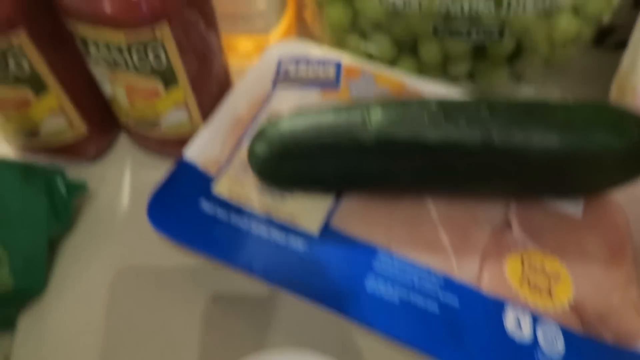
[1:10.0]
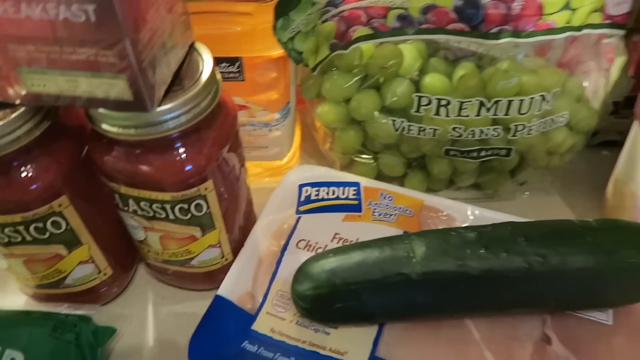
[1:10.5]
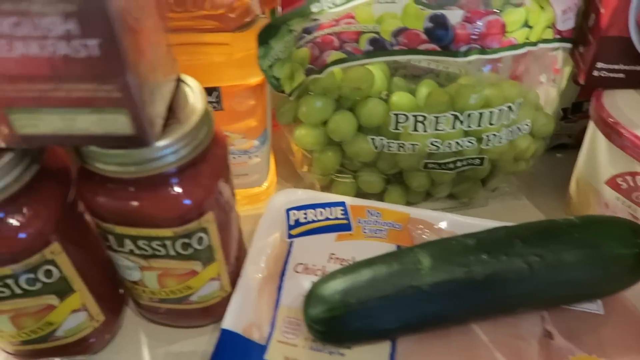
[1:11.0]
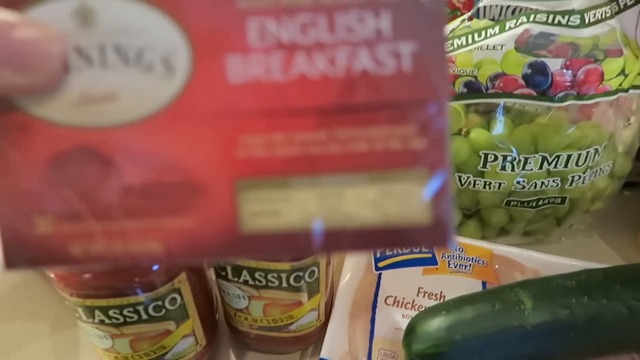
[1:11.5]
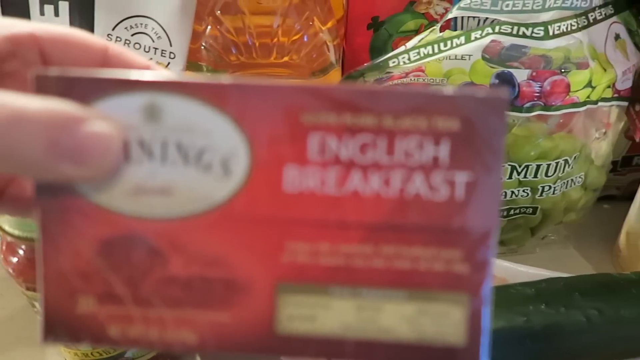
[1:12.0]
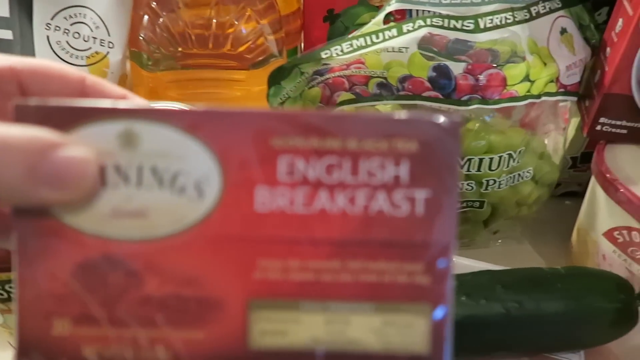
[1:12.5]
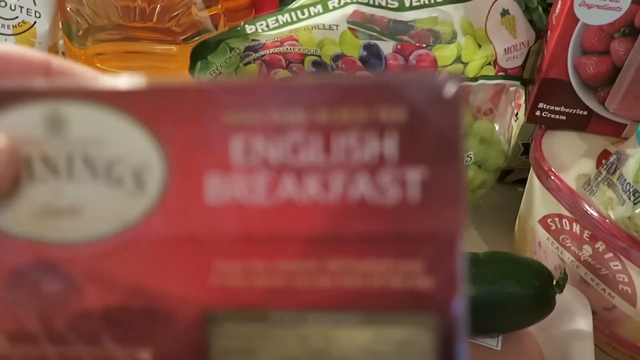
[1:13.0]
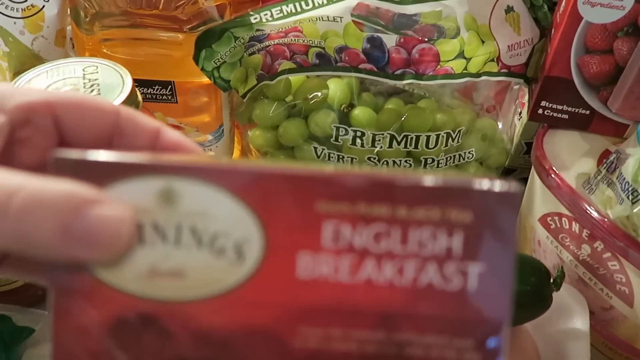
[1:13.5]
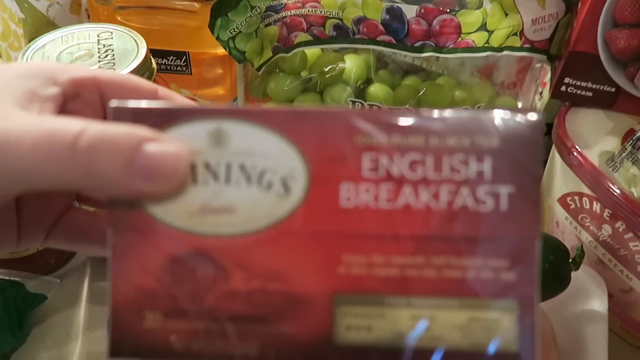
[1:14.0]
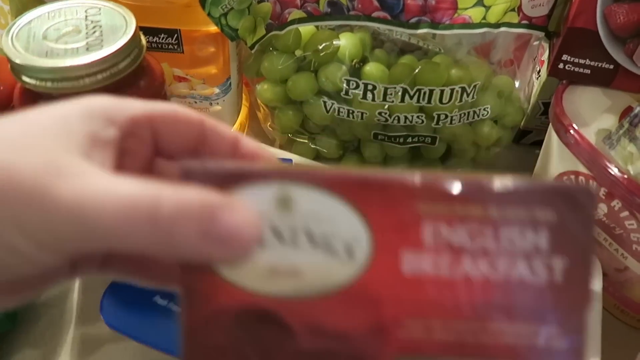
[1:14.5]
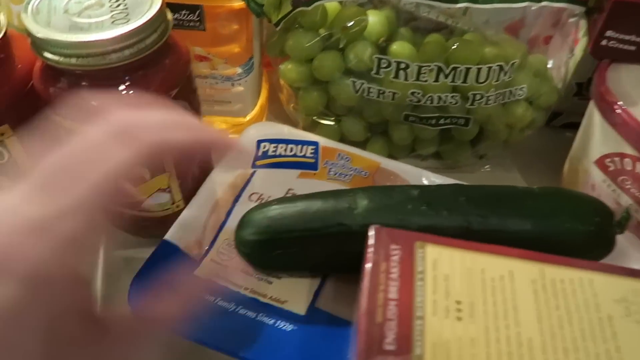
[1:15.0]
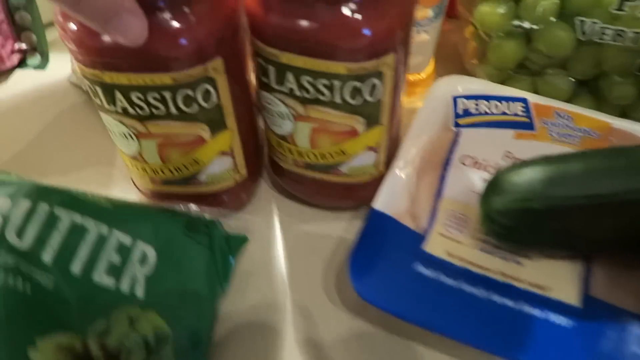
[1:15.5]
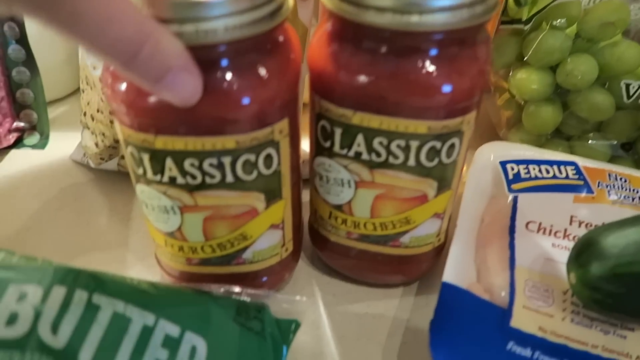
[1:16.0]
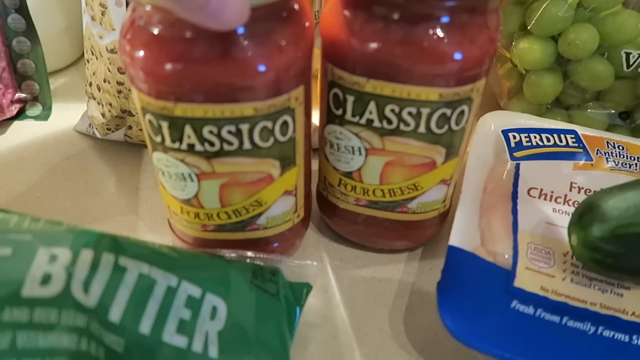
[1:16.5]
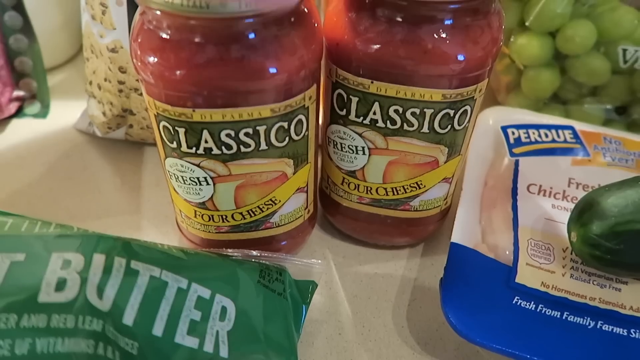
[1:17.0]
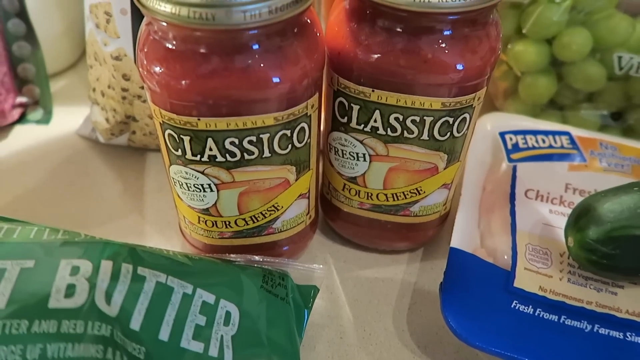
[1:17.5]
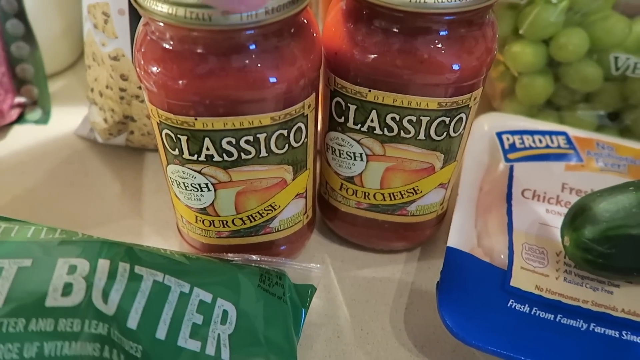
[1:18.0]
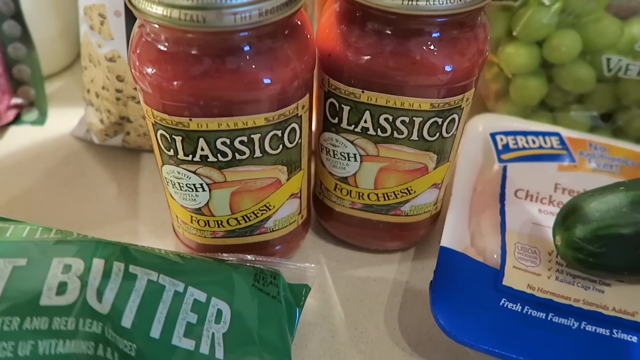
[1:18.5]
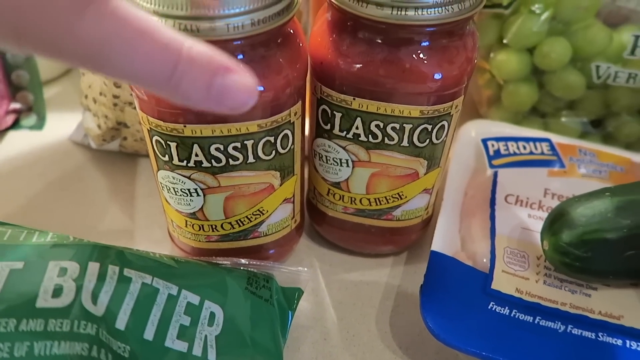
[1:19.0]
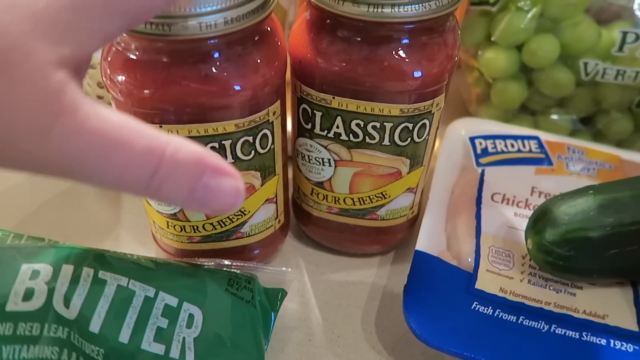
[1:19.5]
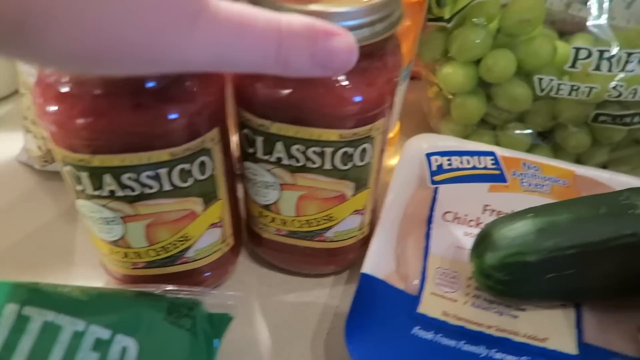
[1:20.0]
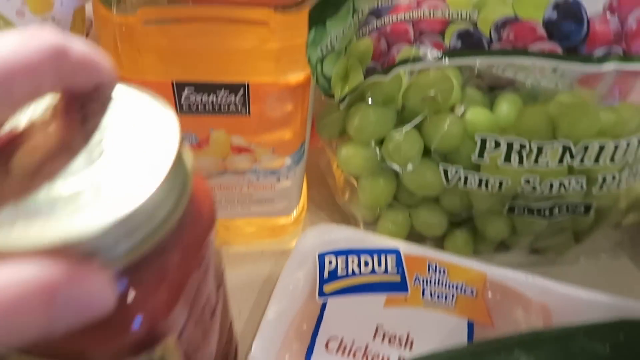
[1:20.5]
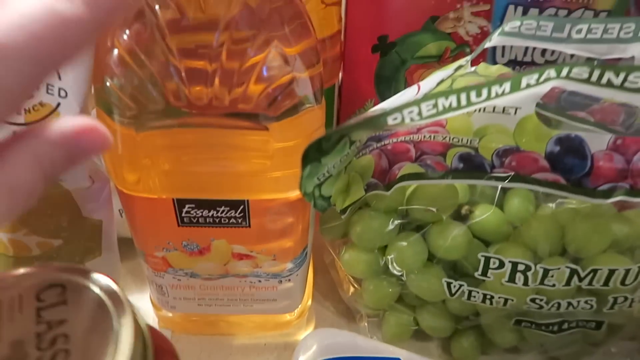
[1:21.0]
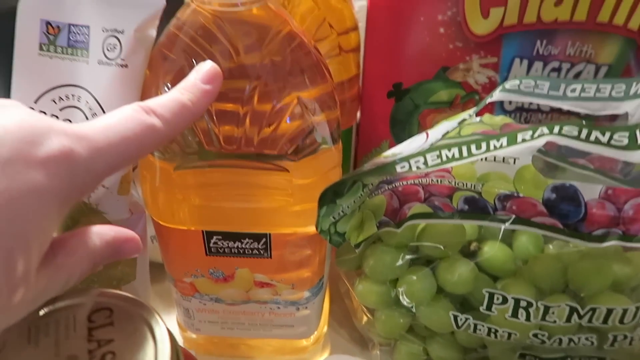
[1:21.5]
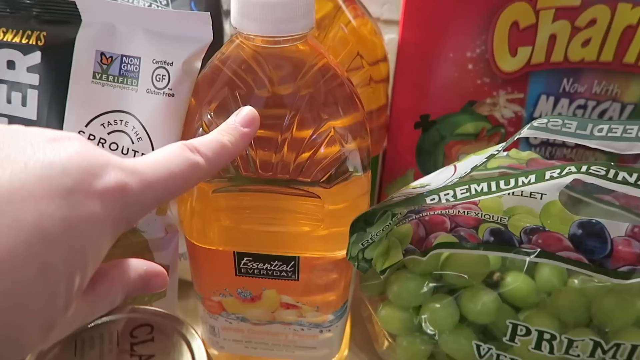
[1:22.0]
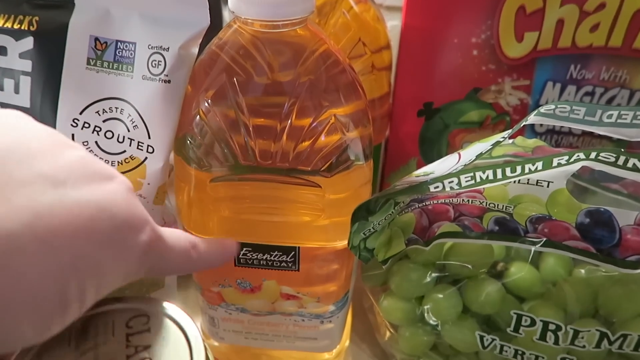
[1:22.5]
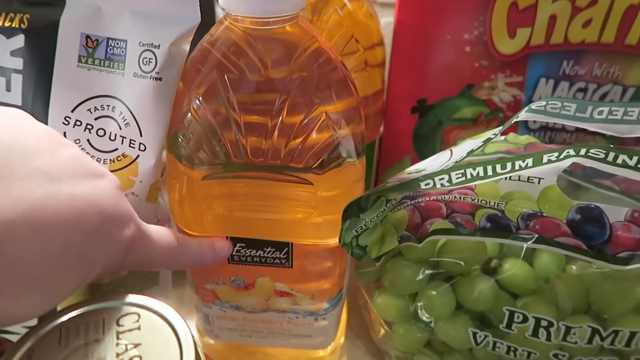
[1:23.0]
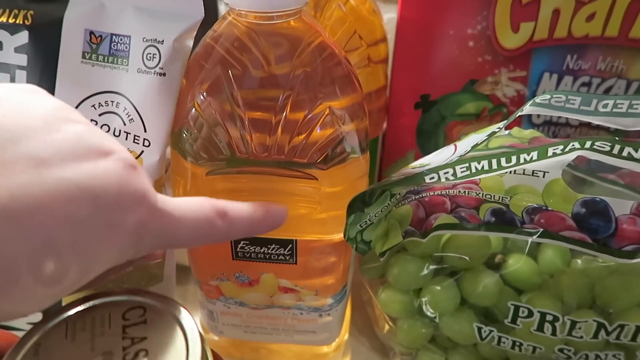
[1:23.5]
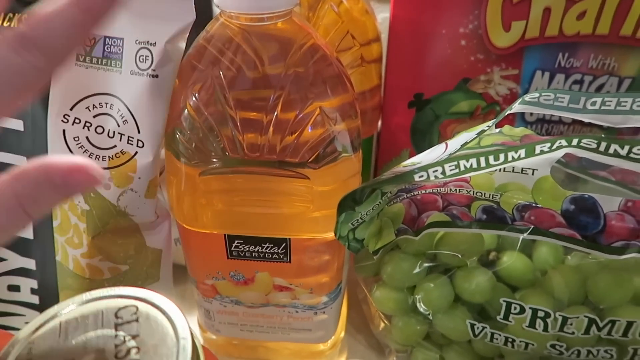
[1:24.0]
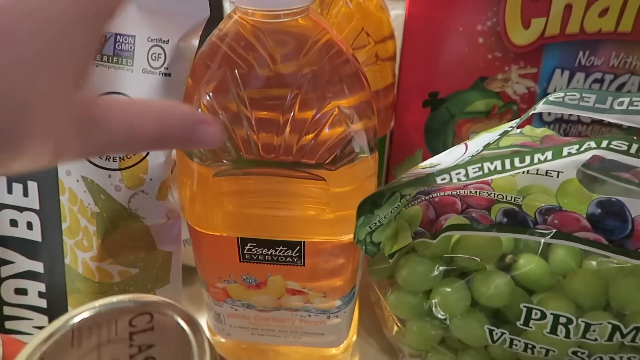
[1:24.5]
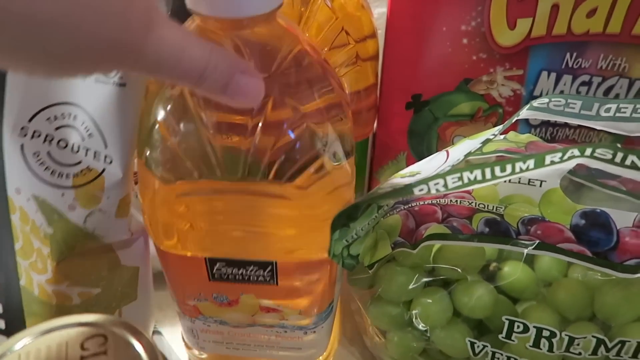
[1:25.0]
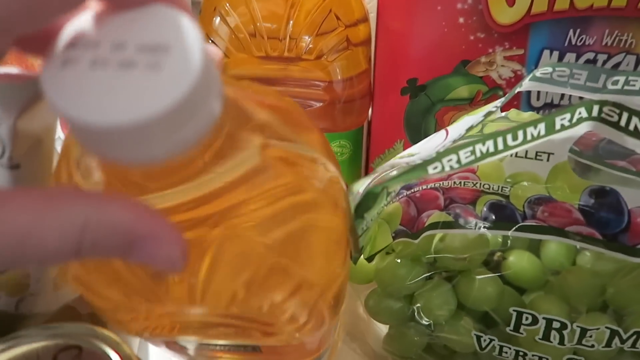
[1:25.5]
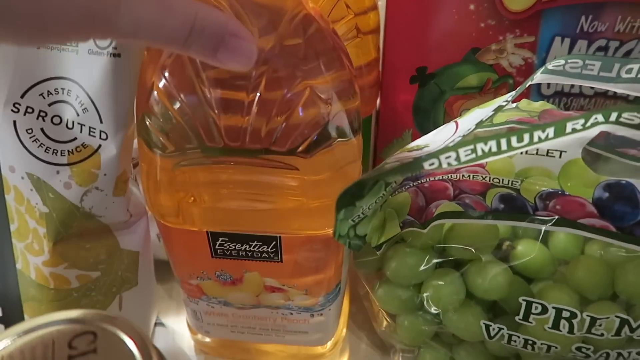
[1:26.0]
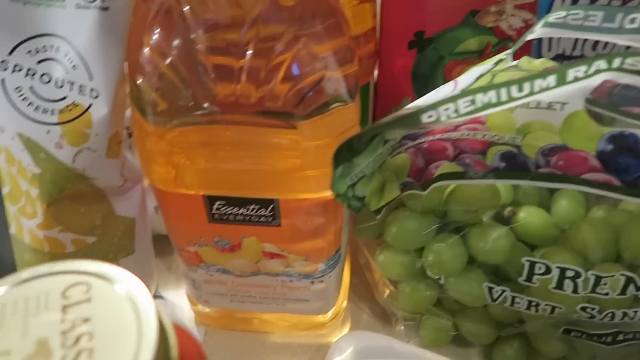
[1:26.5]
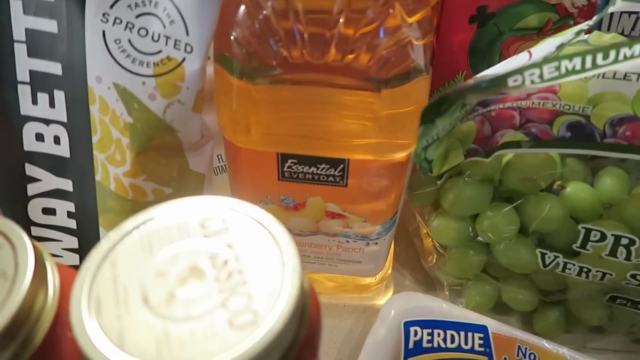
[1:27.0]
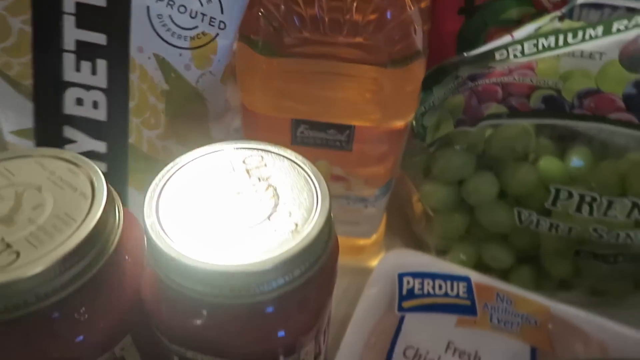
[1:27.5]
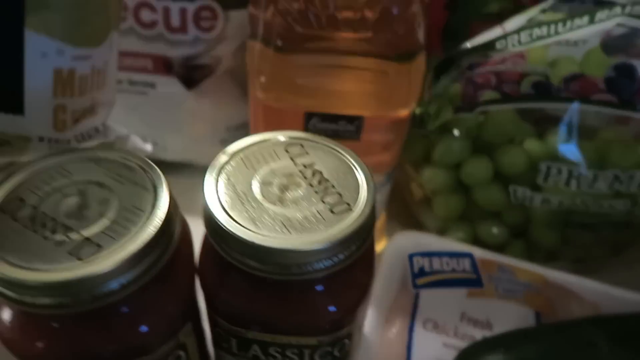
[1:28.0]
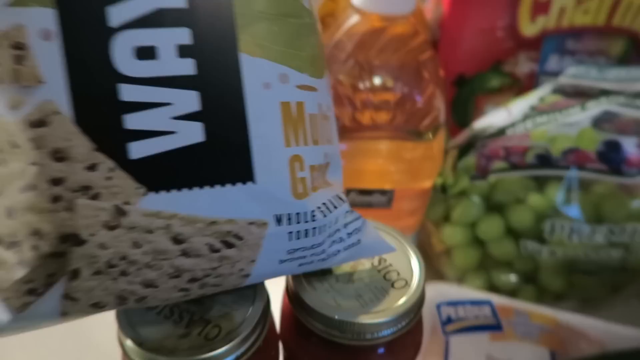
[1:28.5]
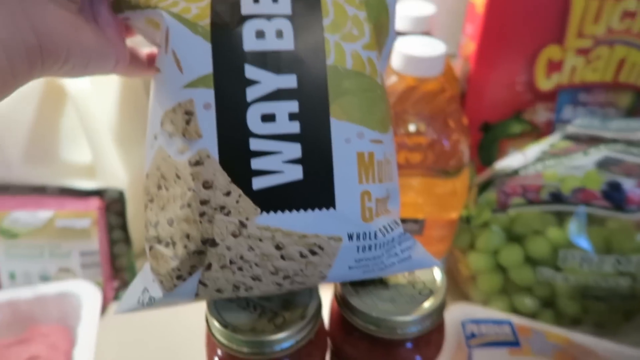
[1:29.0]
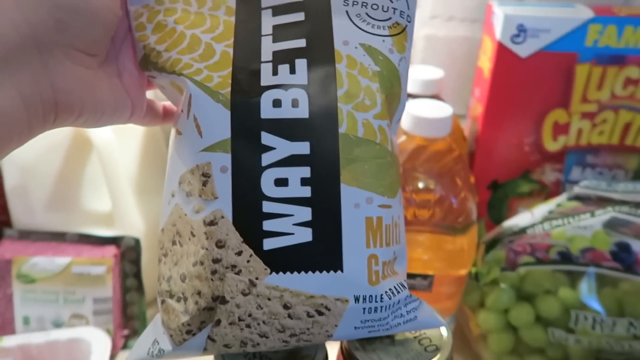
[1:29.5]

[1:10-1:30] The camera pans across slightly, and the hand holds a box of Twining's English breakfast tea in front of the camera, then puts it down. The focus moves to the two jars of pasta sauce, which are Classico branded; the sauce is red, but the label indicates it is for cheese sauce. Behind them is a large clear bottle of possibly juice, apparently with peaches on the front, branded essential everyday, and the hand moves the bottle around, tapping it. The hand then picks up a bag of crackers marked multi-grain: small square crackers full of seeds, with an image of cartoon corn on the packaging. The logo on the crackers seems to read way better, shown sideways in white lettering in a black box.